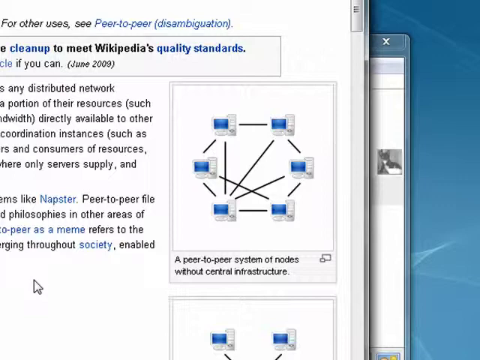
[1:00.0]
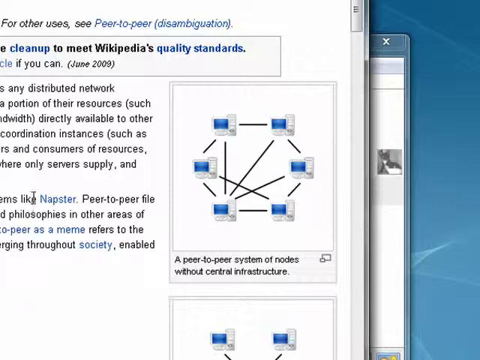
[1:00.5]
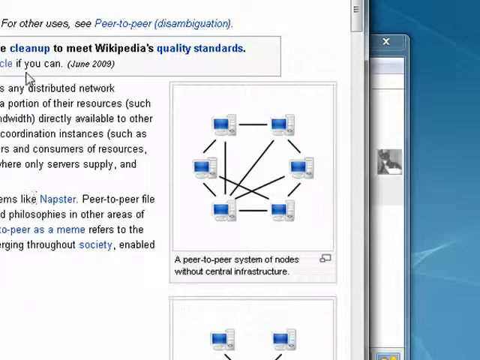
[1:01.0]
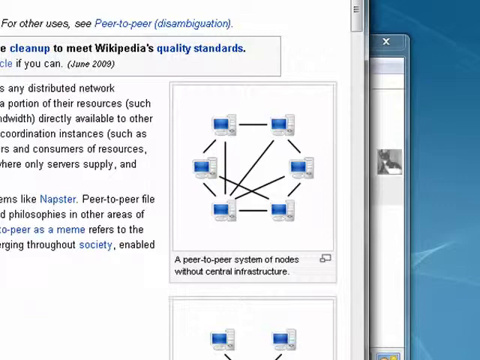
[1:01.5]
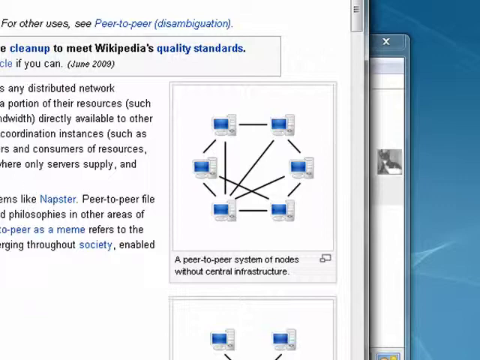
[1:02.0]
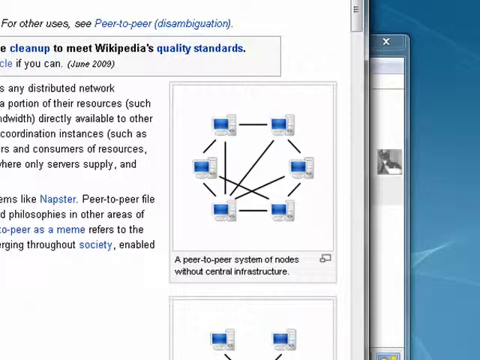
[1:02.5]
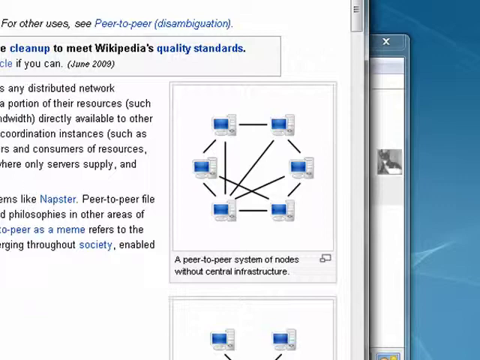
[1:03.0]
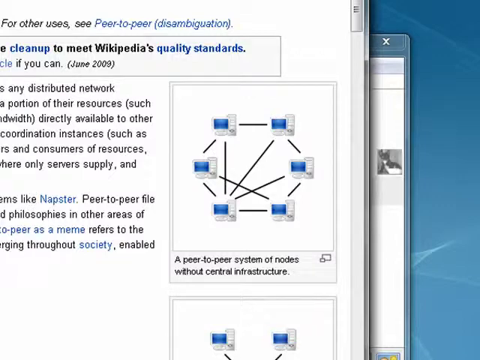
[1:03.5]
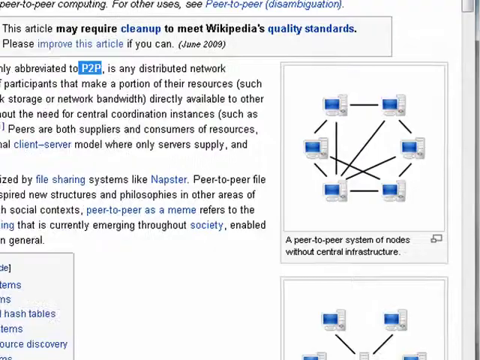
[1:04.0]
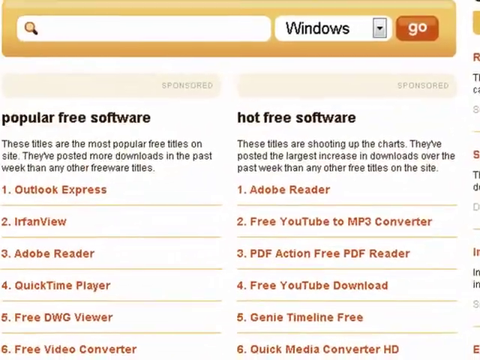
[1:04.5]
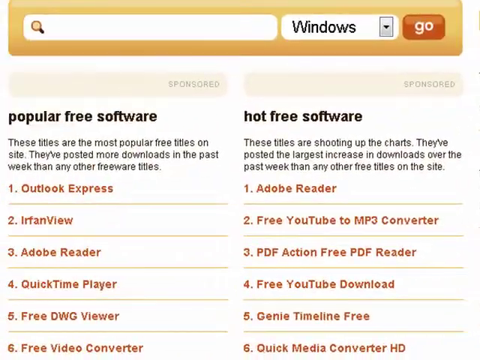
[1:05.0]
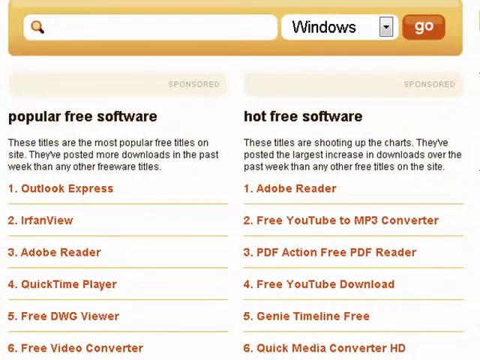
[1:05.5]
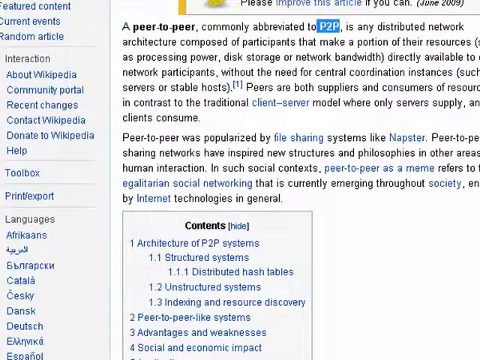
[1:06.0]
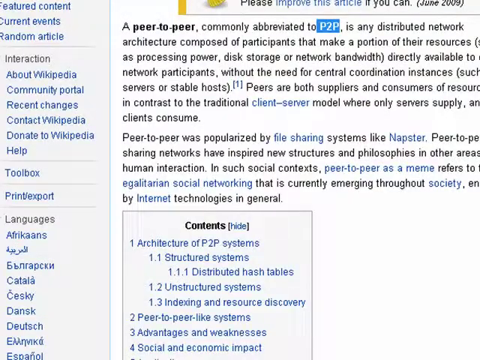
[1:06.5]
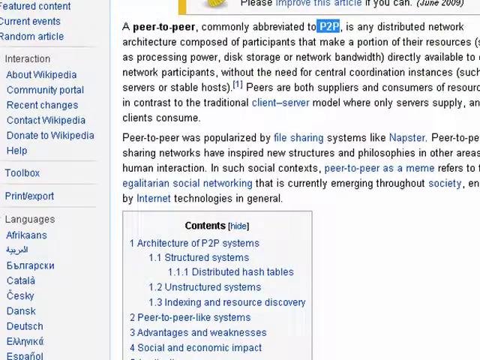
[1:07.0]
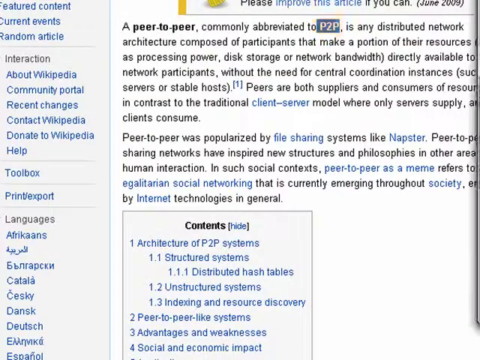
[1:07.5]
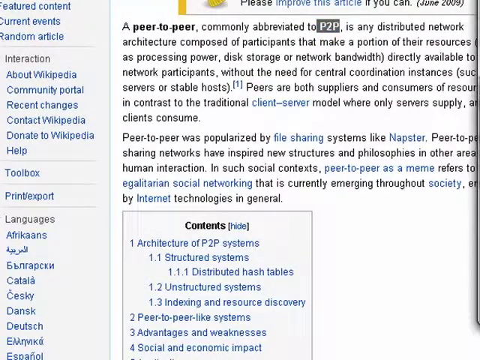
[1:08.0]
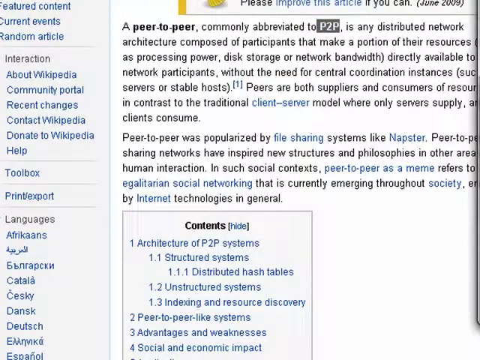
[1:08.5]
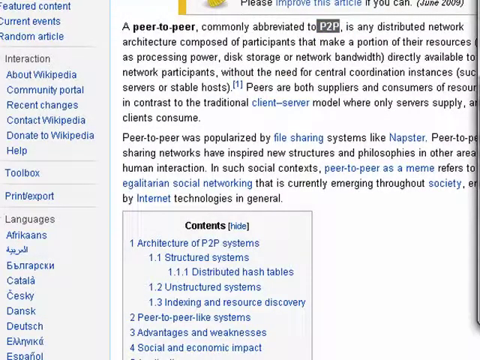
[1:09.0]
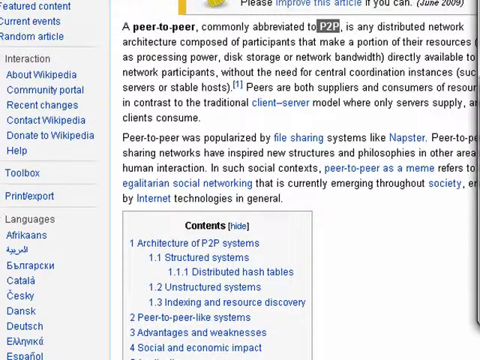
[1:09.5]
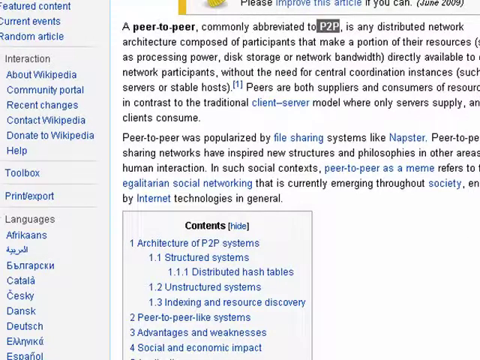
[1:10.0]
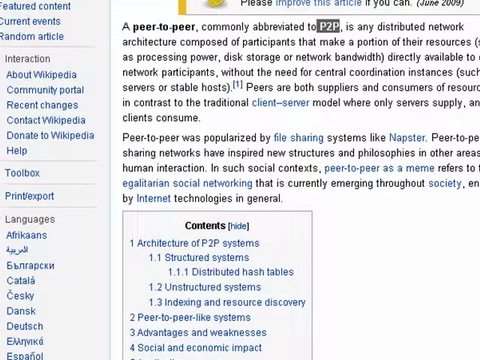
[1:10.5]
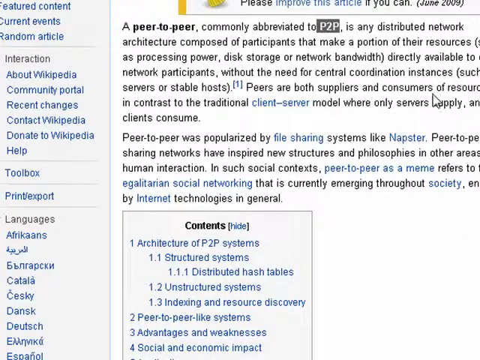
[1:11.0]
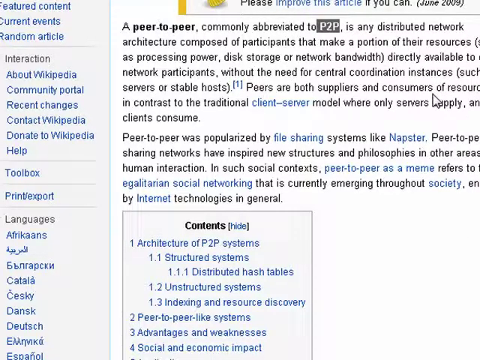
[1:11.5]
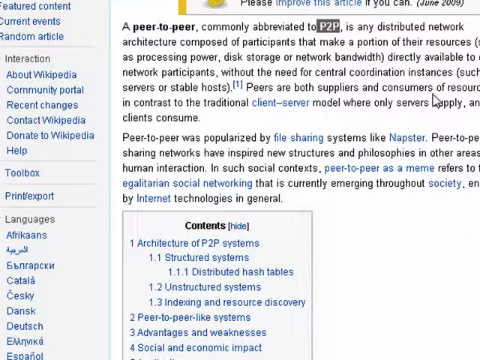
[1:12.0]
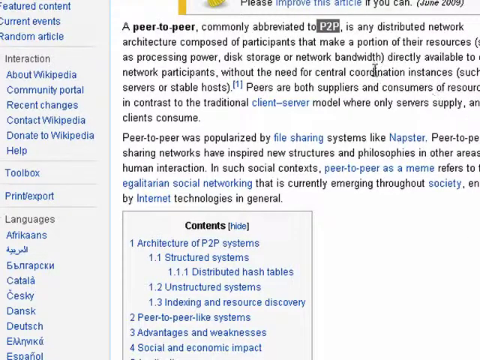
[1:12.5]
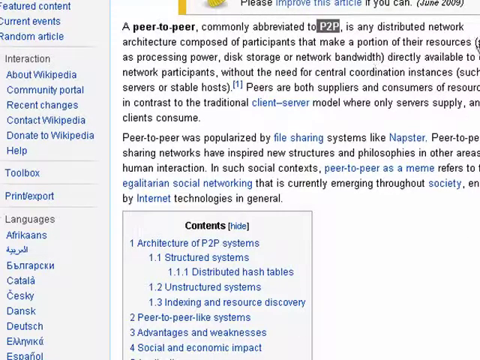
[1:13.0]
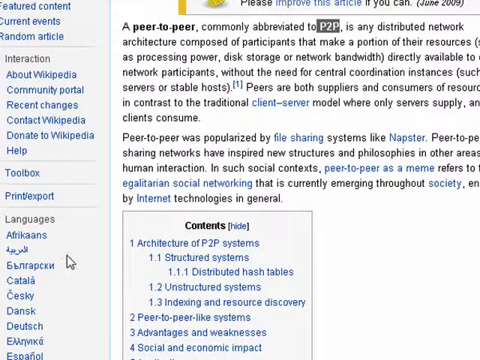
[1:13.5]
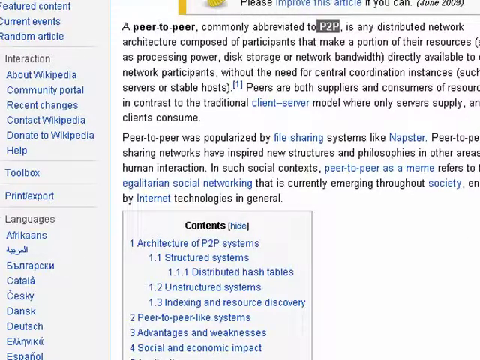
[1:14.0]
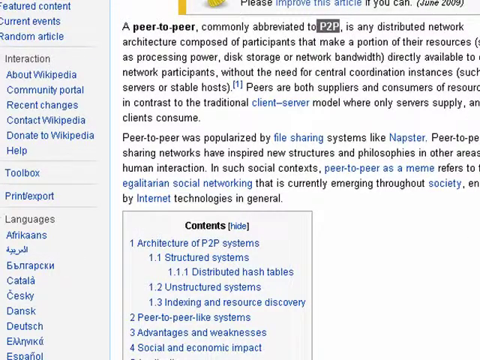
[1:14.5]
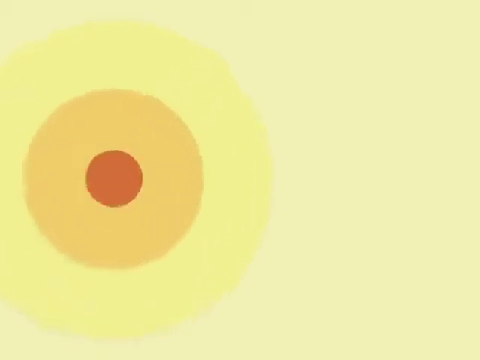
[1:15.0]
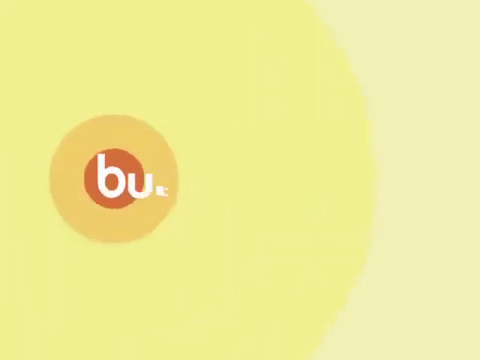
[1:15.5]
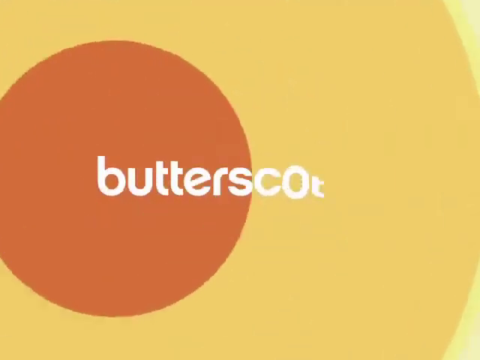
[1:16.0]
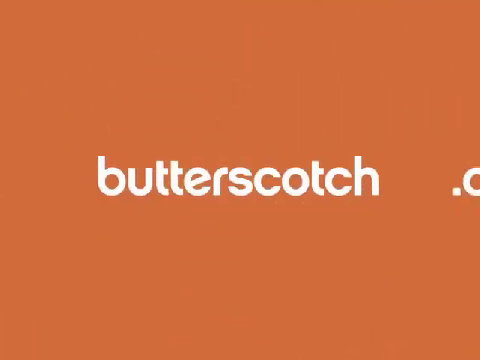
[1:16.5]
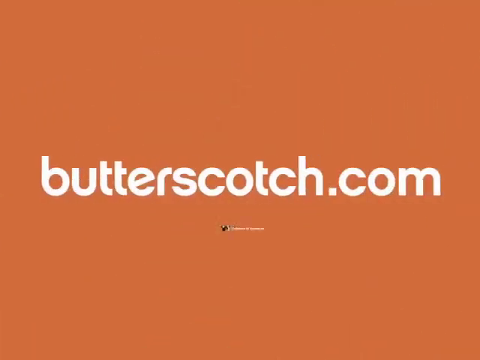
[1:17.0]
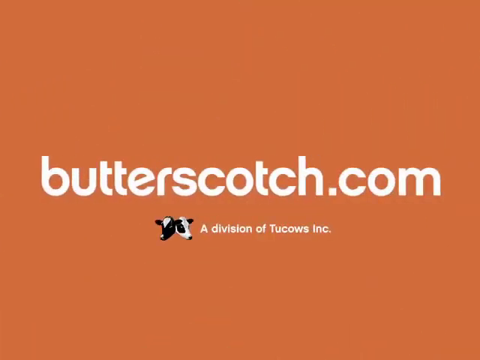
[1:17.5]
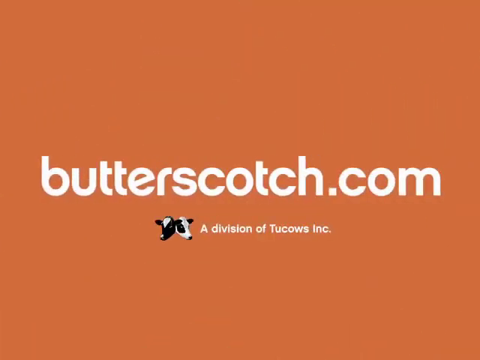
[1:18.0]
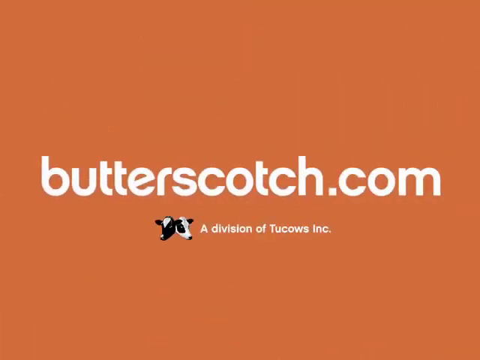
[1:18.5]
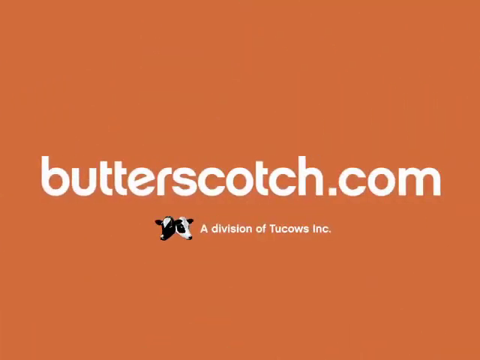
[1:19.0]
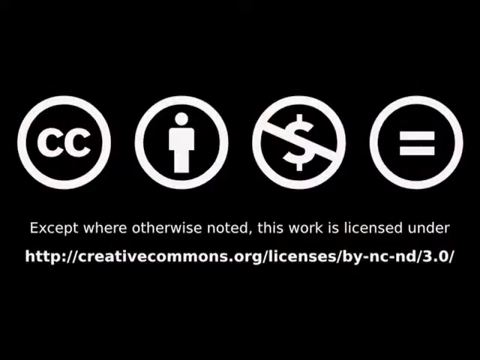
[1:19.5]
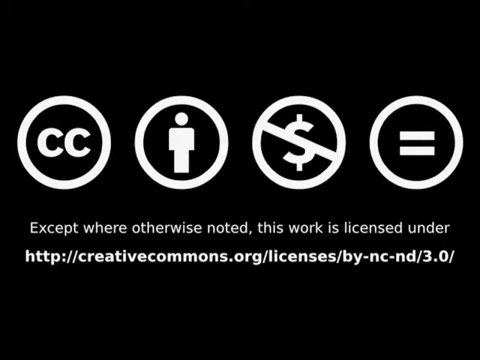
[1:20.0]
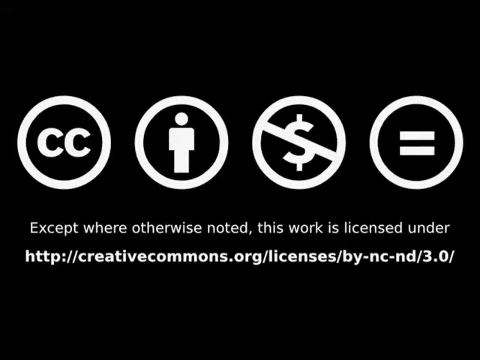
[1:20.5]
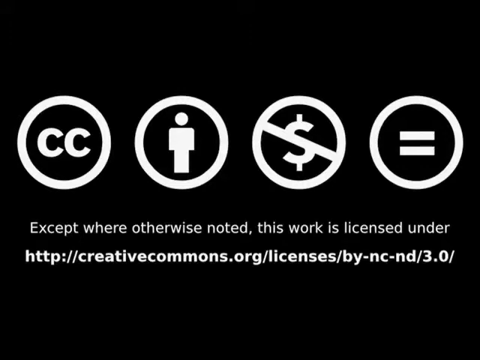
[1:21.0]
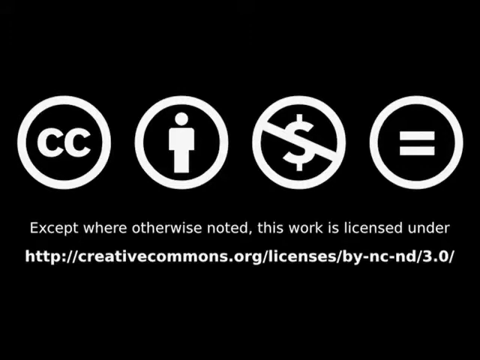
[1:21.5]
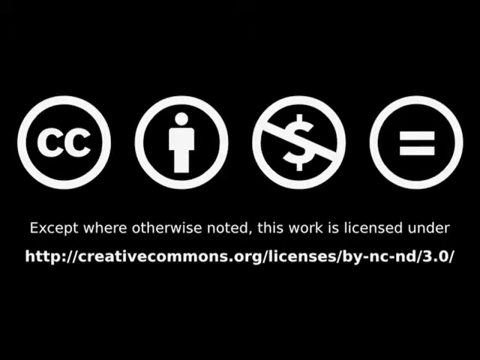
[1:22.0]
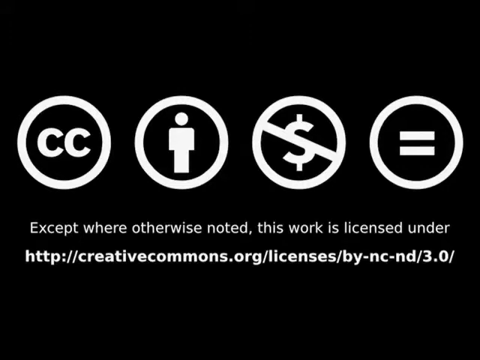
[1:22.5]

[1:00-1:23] The Wikipedia peer-to-peer page is shown. The author has been moving his mouse over the image of a peer-to-peer system of nodes without central infrastructure, located on the right-hand side. He moves over the page with his mouse, goes back over to the side, and again marks "P2P" up in the writing where the abbreviation appears. He moves the mouse around over the entire description of P2P. The screen then changes to butterscotch.com, a division of Two Cows, Incorporated. It changes again to show a circle around "CC", a circle around a person, a circle with a line through it for no money, and a circle around an equals sign, with text reading "except where otherwise noted this work is licensed under" a Creative Commons license.